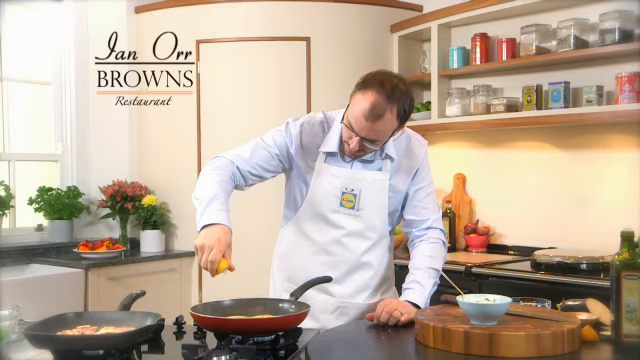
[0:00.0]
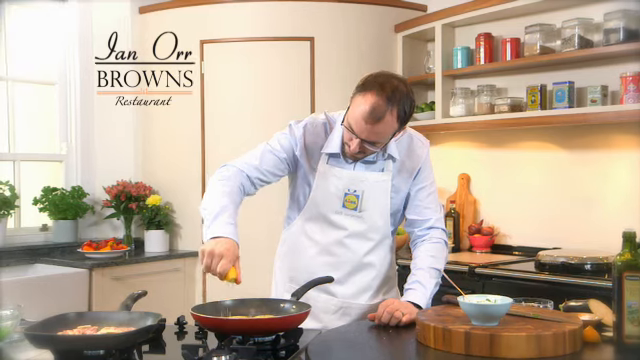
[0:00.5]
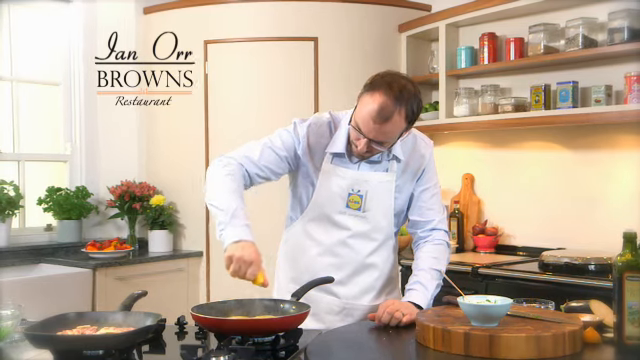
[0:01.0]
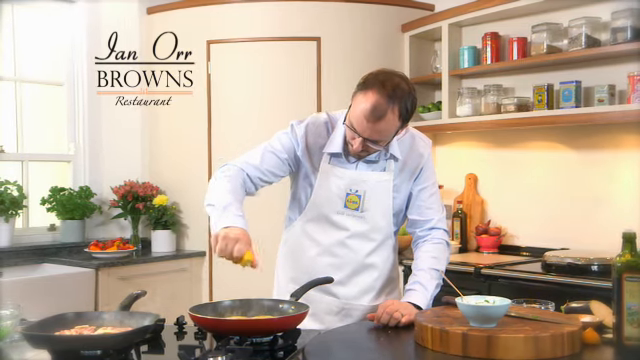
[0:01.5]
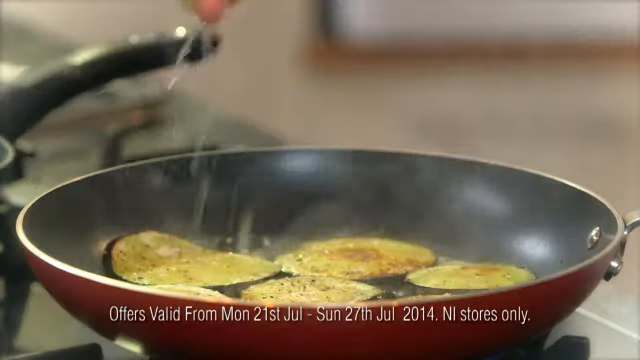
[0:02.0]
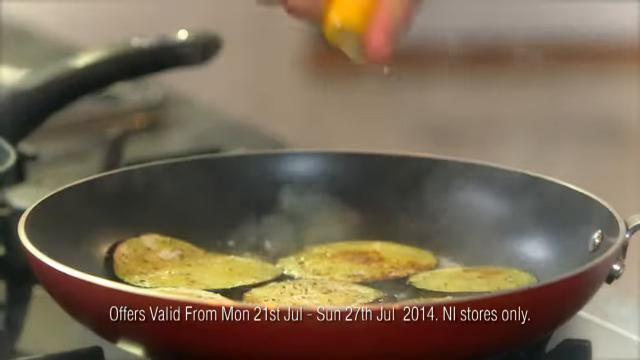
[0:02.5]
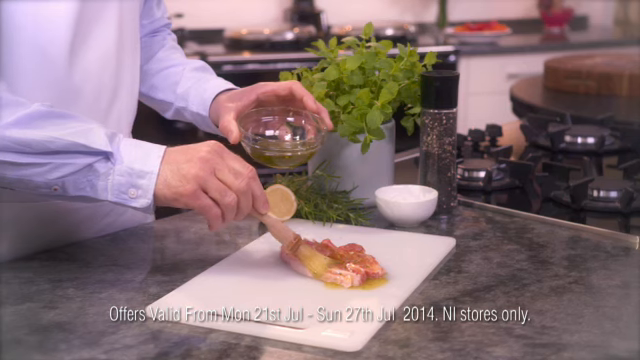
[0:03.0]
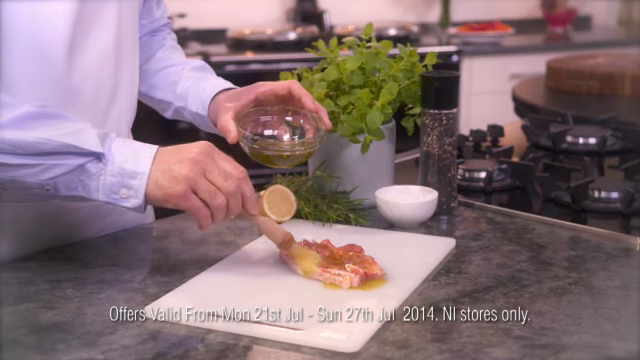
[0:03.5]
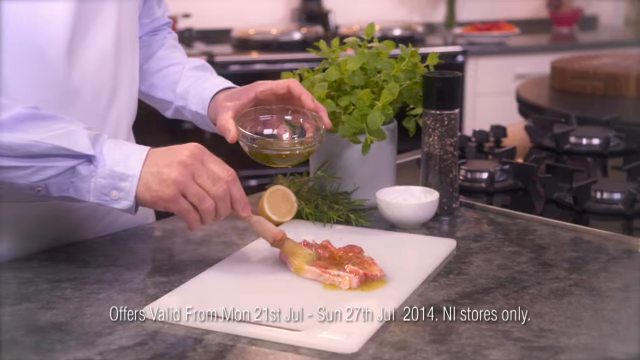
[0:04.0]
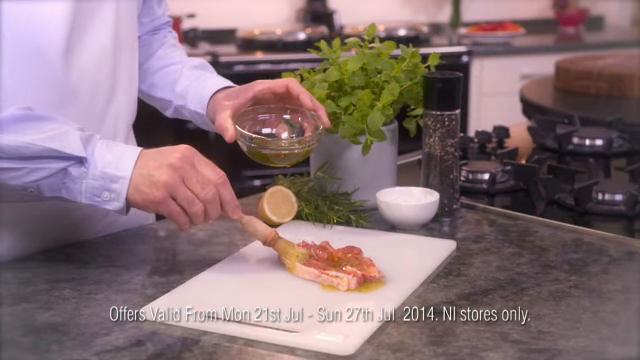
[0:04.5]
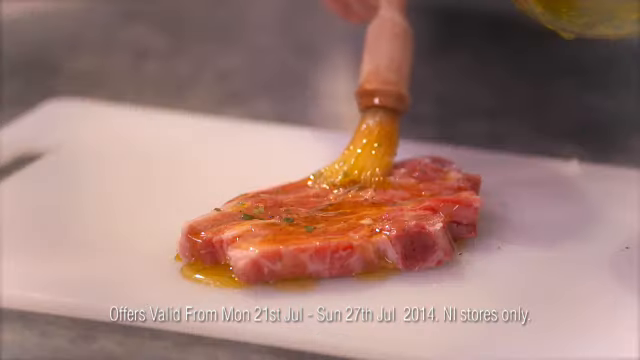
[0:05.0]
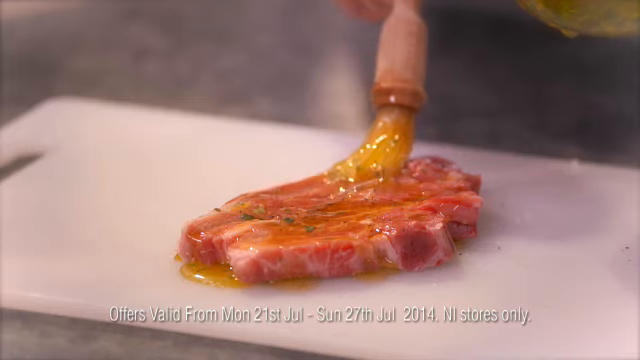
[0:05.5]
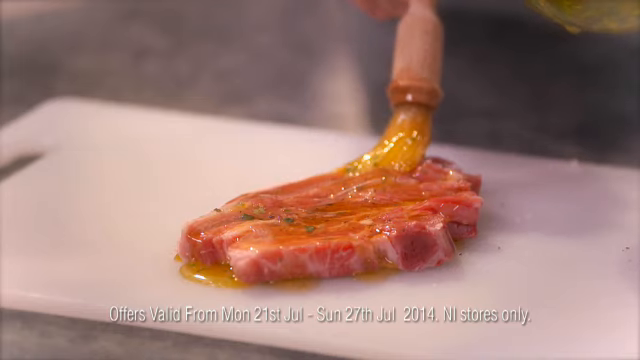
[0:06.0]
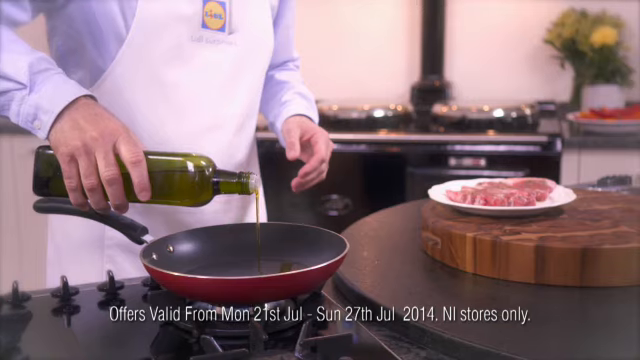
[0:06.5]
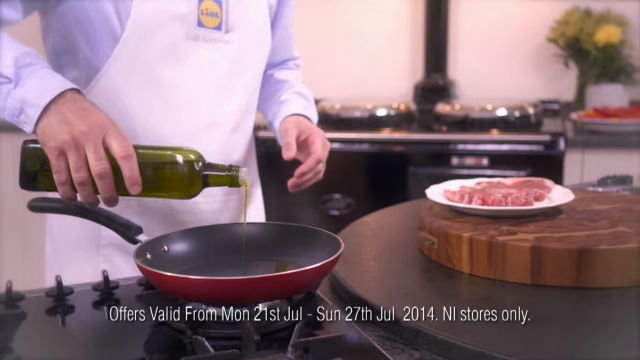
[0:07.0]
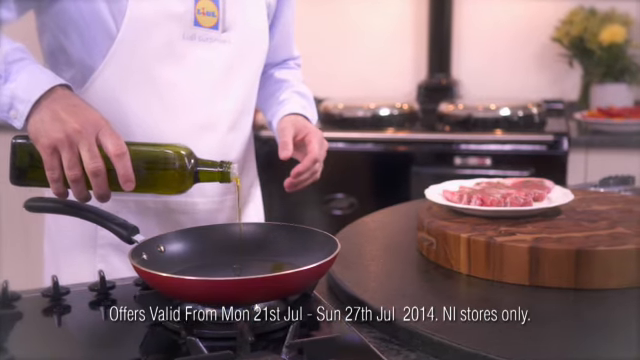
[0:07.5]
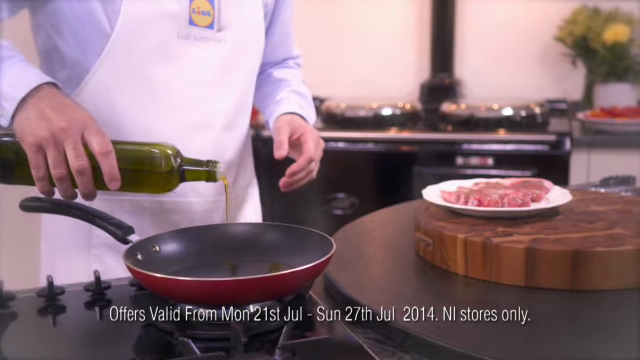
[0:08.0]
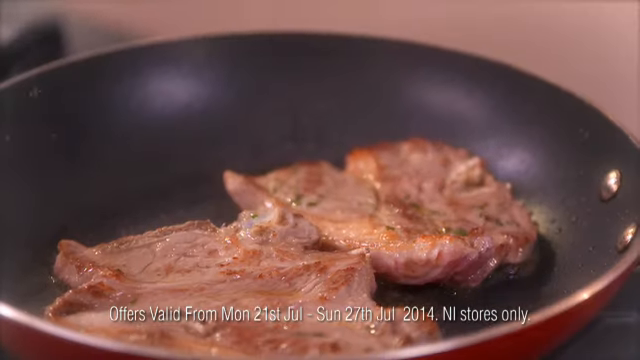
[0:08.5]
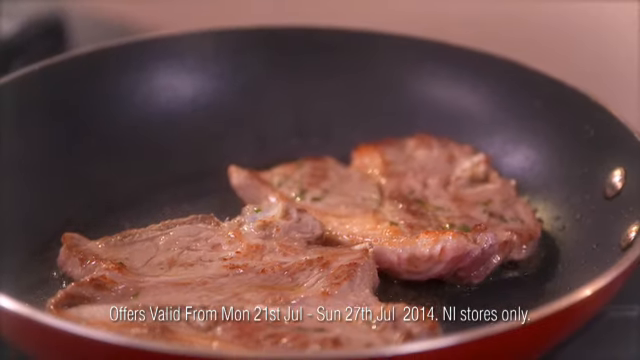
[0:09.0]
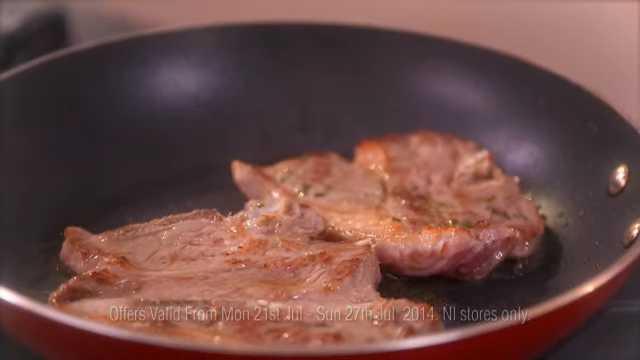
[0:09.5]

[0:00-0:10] On-screen text in the top left corner reads "Jan or browns restaurant"; the words "jan or" are written in cursive, "browns" is in uppercase, and "restaurant" is in cursive. A man who appears to be in his mid-40s, wearing reading glasses, an apron and a blue shirt, is shown with a kitchen background behind him. He squeezes lemon with his right hand onto a pan, and there is a bowl next to his right hand.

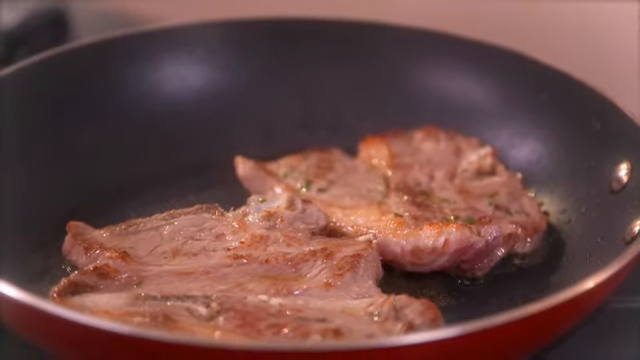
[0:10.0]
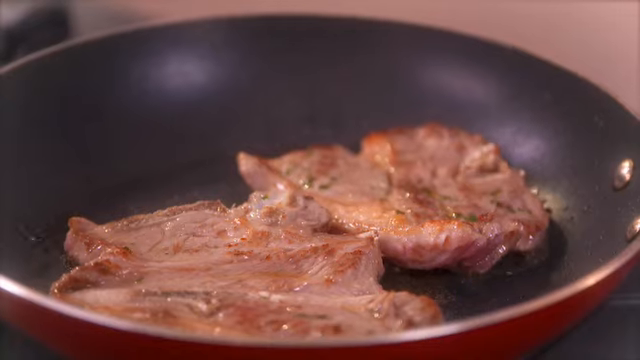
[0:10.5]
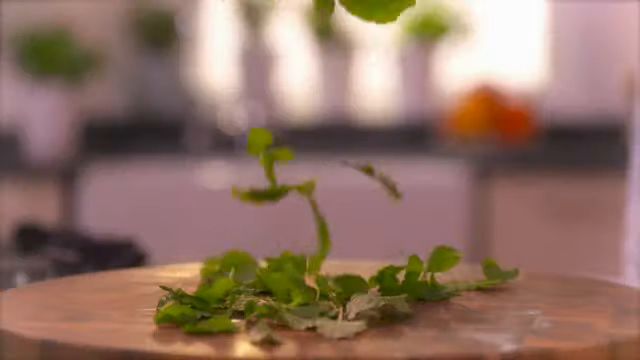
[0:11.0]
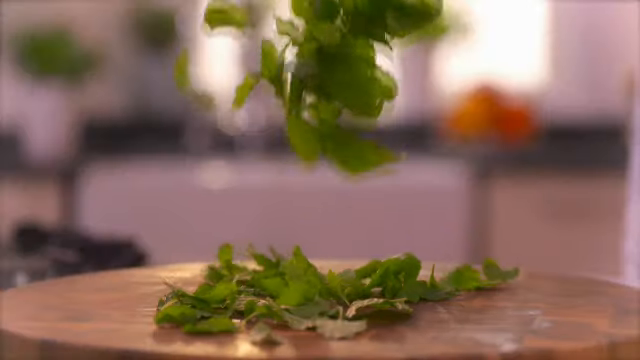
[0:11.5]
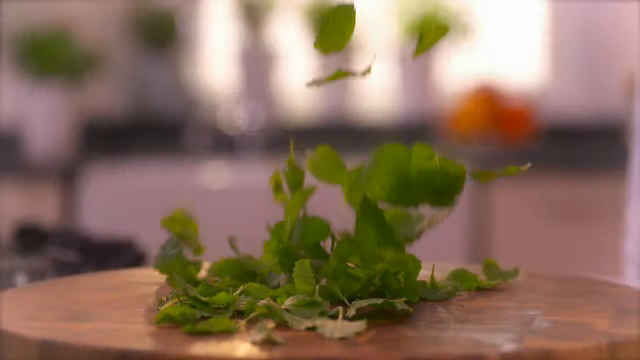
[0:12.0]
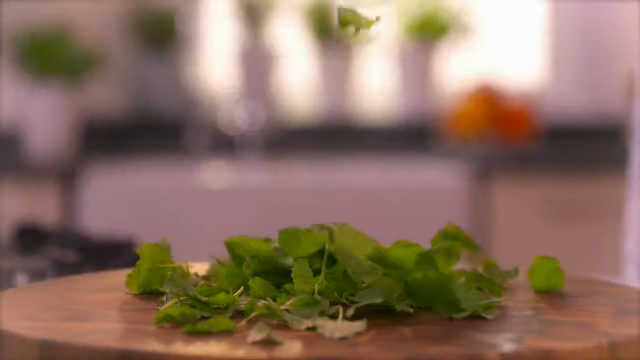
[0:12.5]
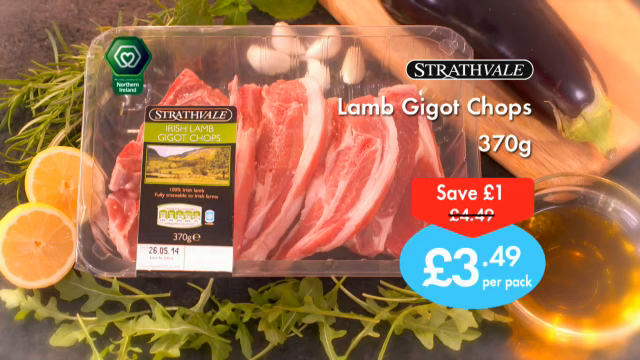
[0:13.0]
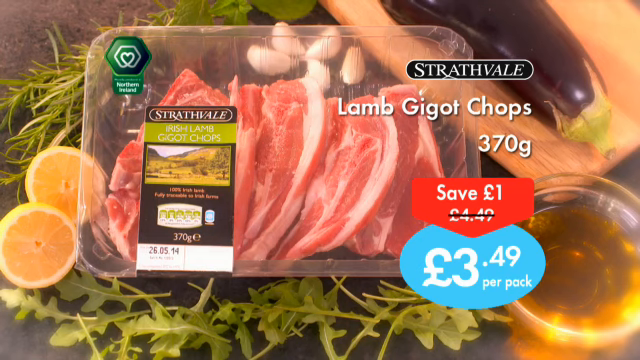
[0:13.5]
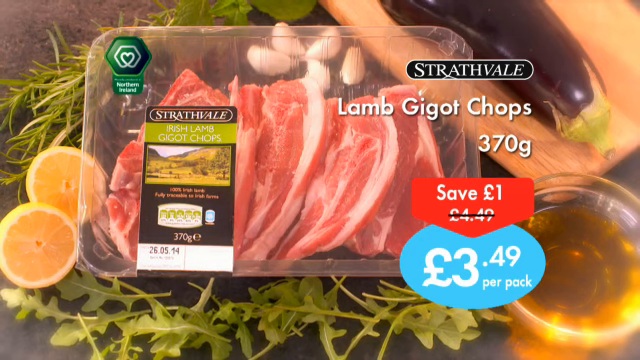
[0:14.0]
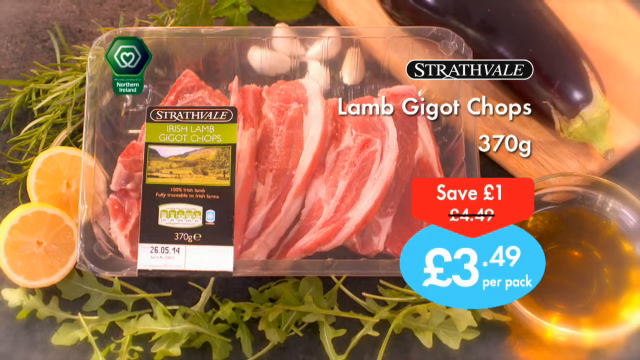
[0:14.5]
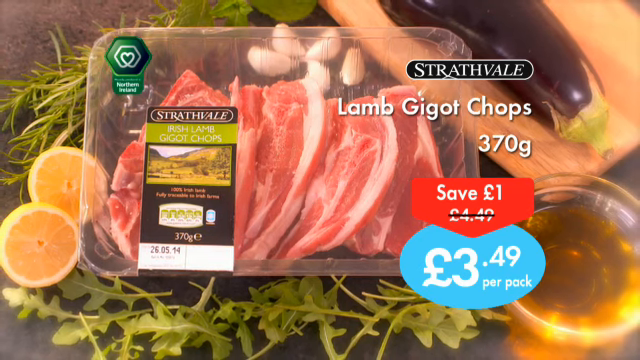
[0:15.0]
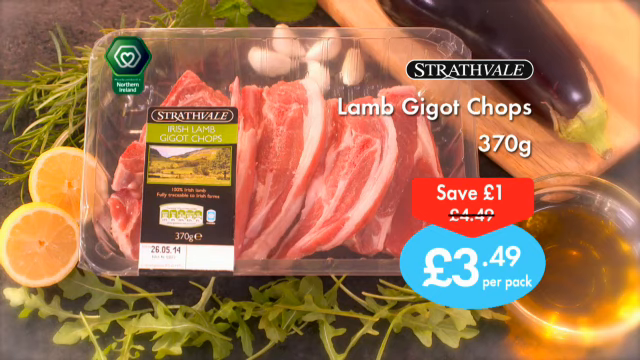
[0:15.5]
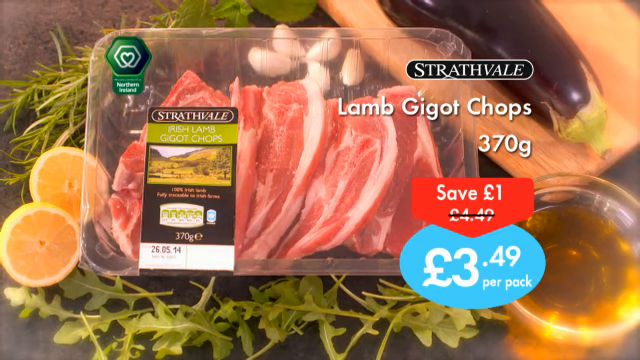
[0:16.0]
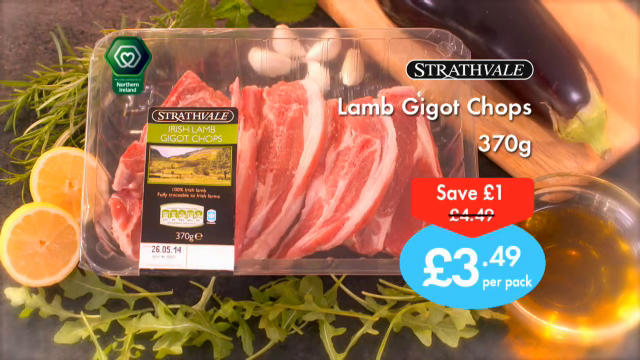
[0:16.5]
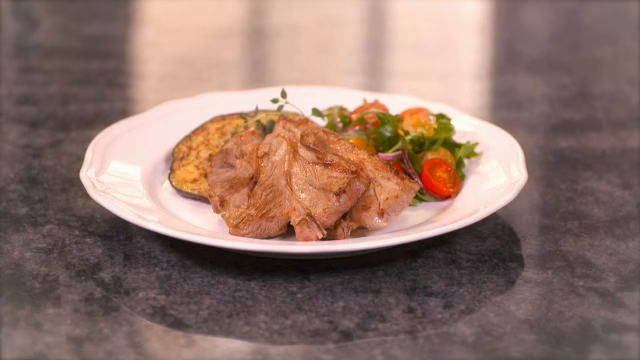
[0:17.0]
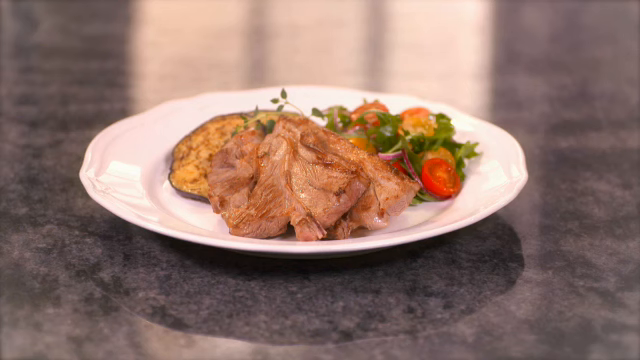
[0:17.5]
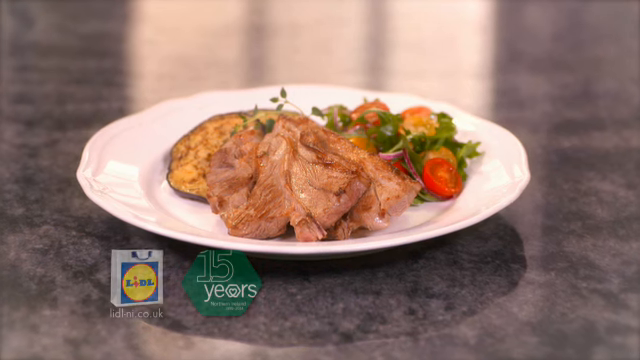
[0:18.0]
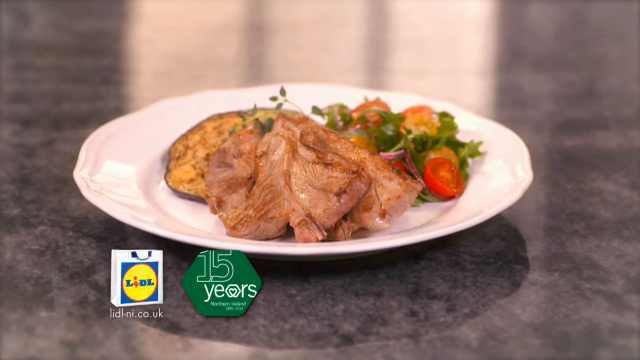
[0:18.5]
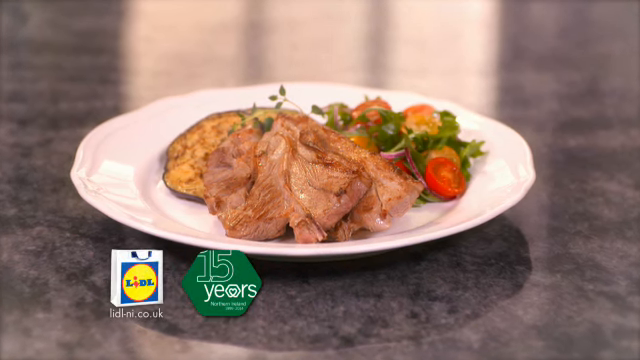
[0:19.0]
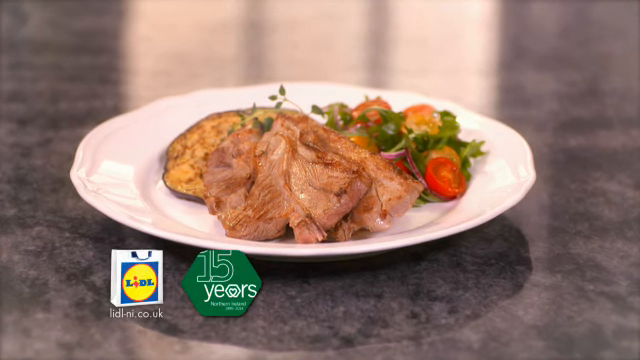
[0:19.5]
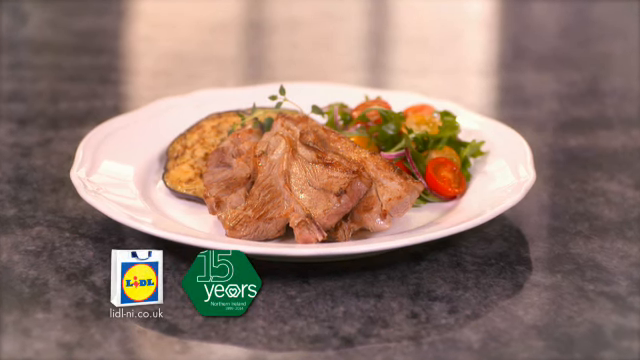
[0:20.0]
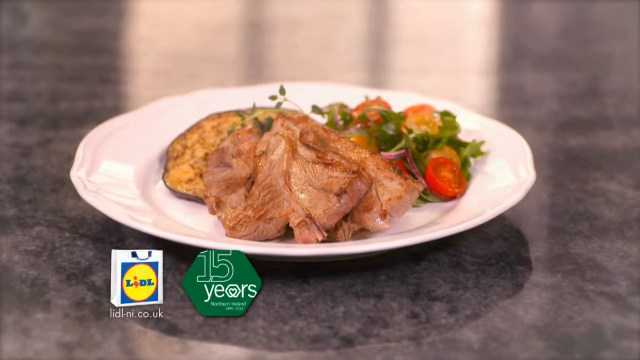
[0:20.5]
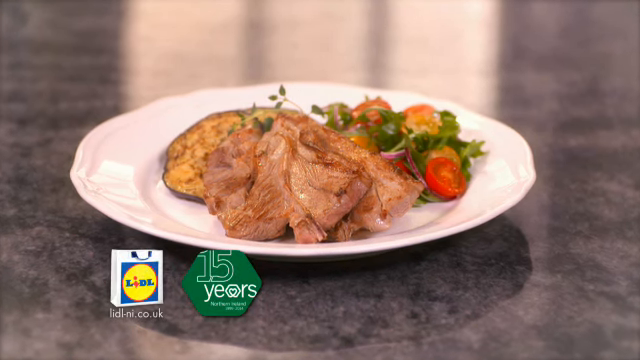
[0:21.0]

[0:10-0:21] The man pours lemon juice onto food in his pan, and text below reads "Offers valid from Monday 21st July to Sunday 27th July 2014". He brushes a steak of meat with some kind of oil and spice mixture, pours some oil into a pan, and then fries two steaks of meat. An animation of parsley falls from the top of the screen. An ad follows for lamb gigas chops, 370 grams at 3.14 pounds per pack, with lemon, parsley, rosemary and eggplant on the side. A cooked meal of the lamb chops is then shown, along with "15 years" written in a green logo.